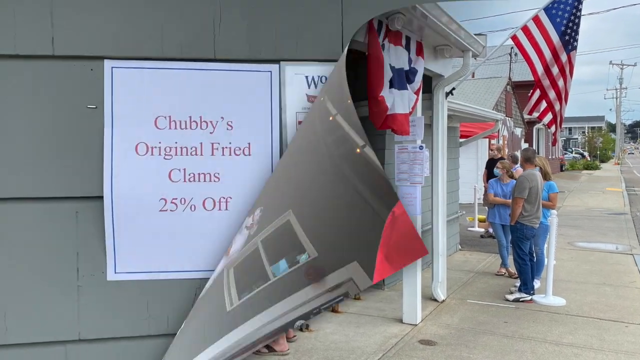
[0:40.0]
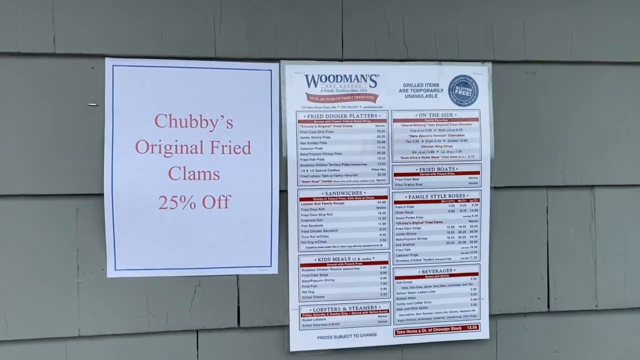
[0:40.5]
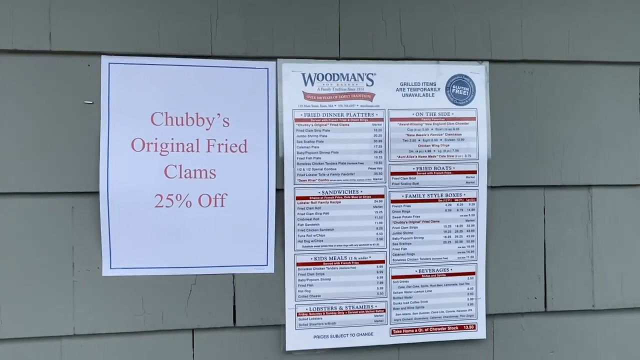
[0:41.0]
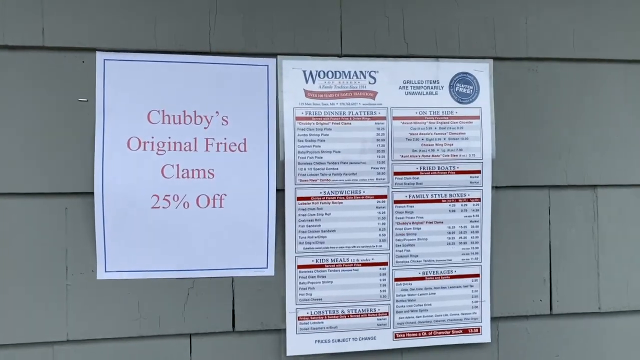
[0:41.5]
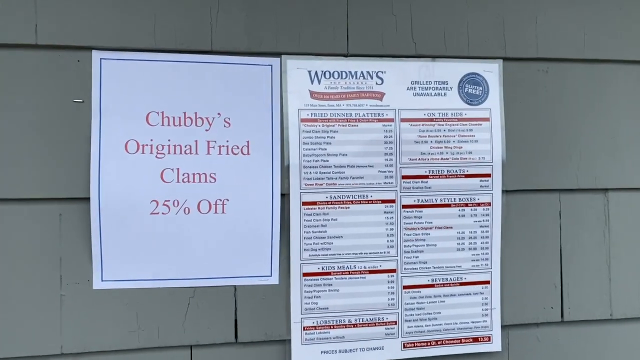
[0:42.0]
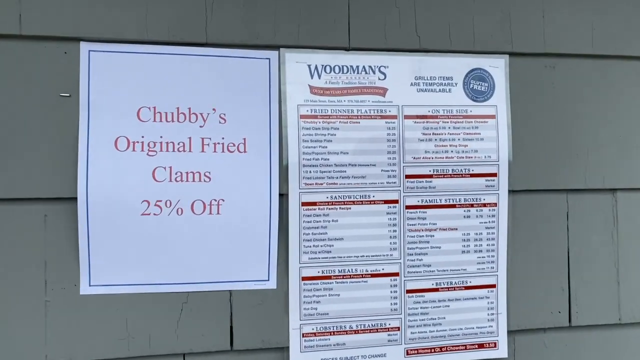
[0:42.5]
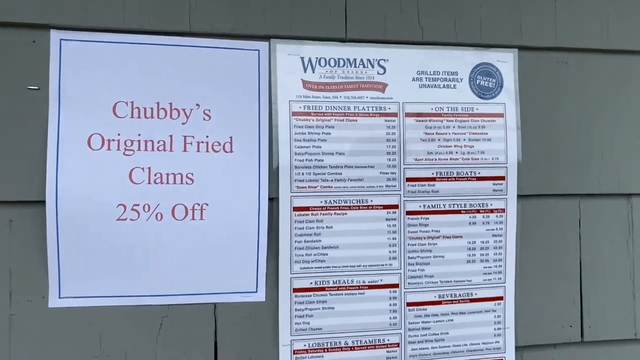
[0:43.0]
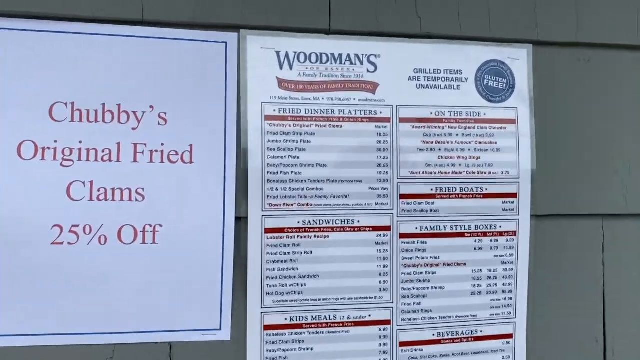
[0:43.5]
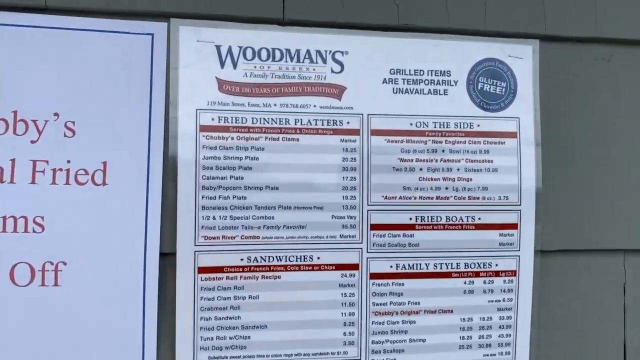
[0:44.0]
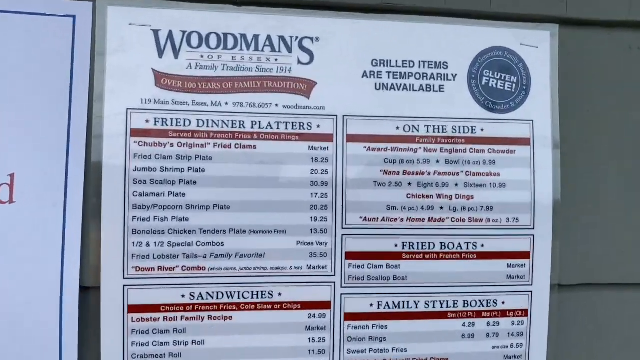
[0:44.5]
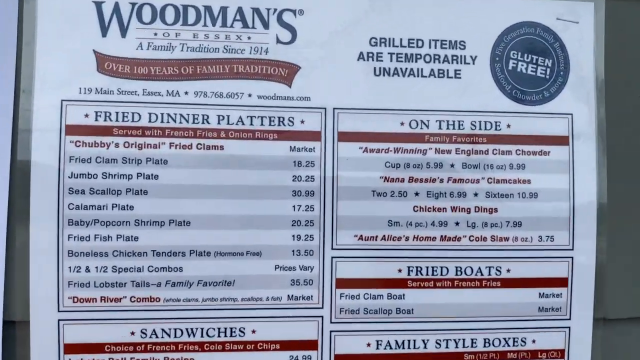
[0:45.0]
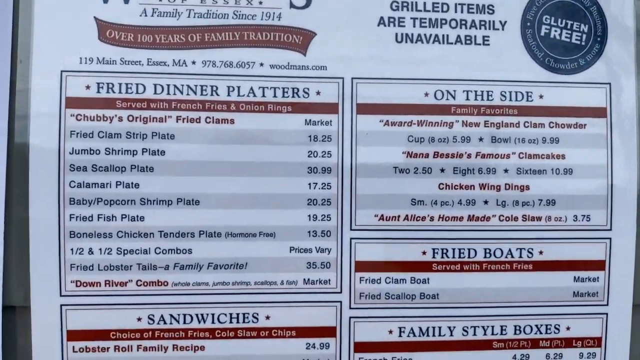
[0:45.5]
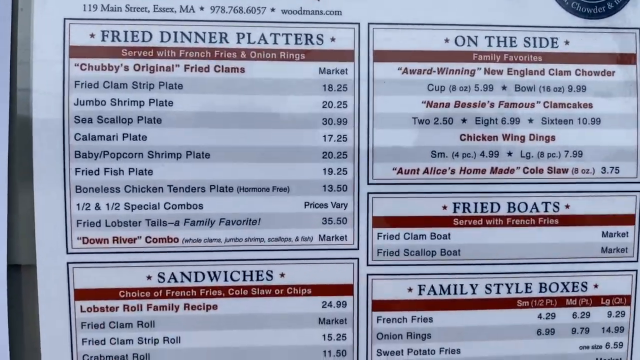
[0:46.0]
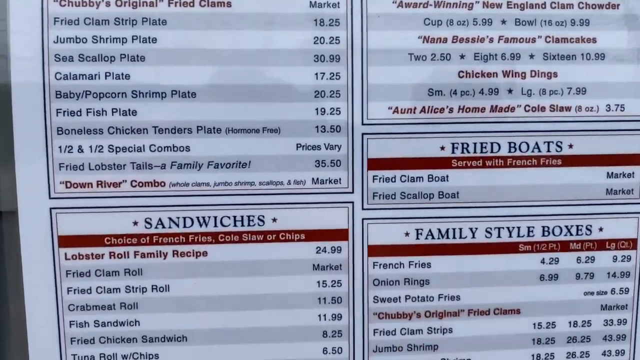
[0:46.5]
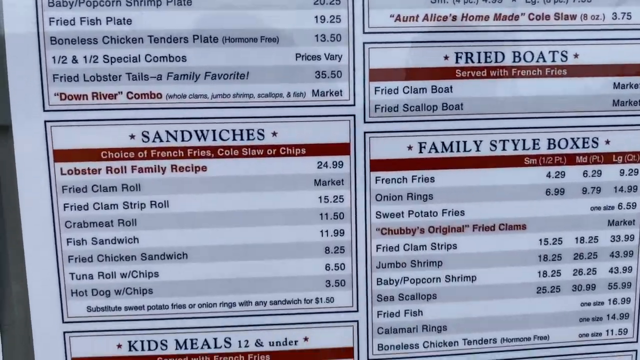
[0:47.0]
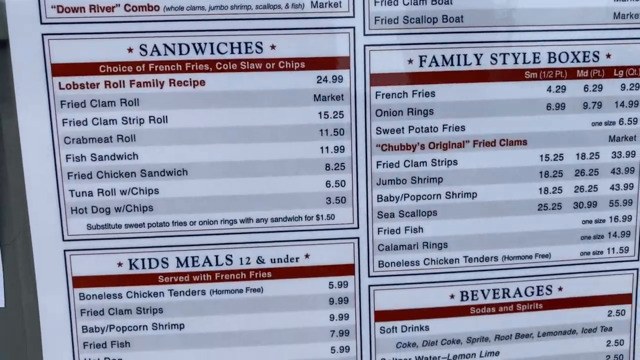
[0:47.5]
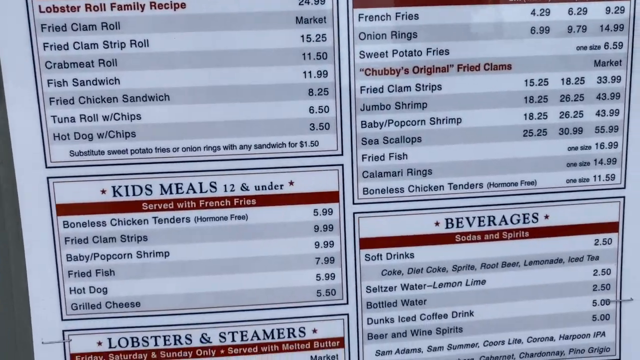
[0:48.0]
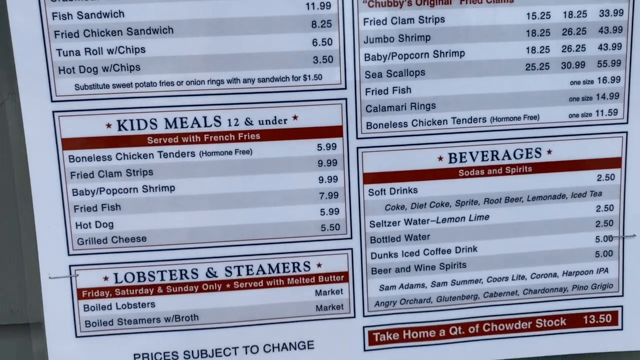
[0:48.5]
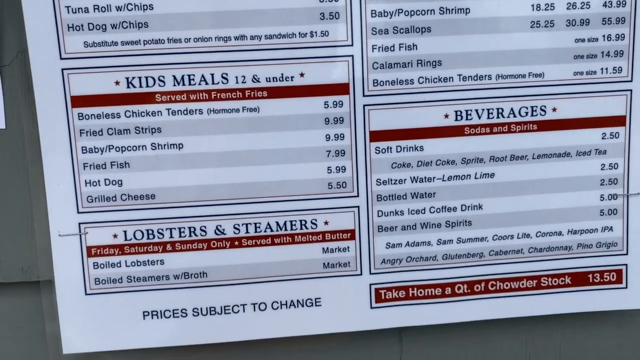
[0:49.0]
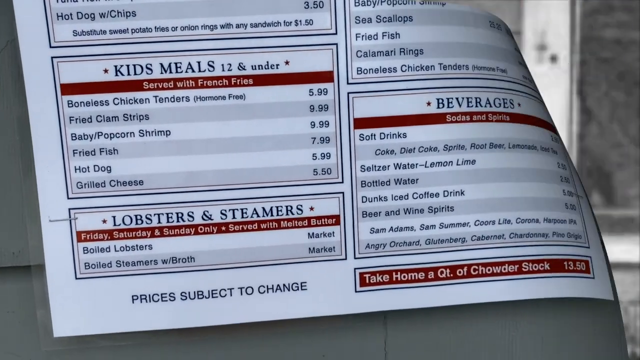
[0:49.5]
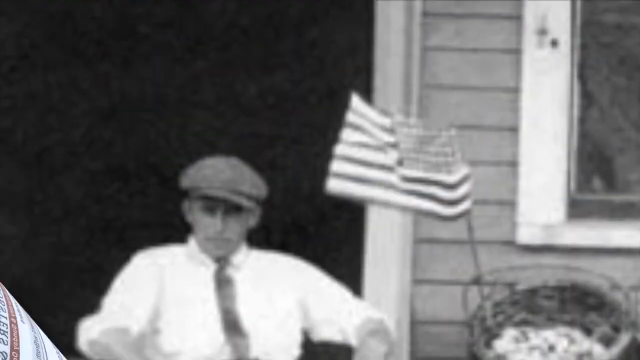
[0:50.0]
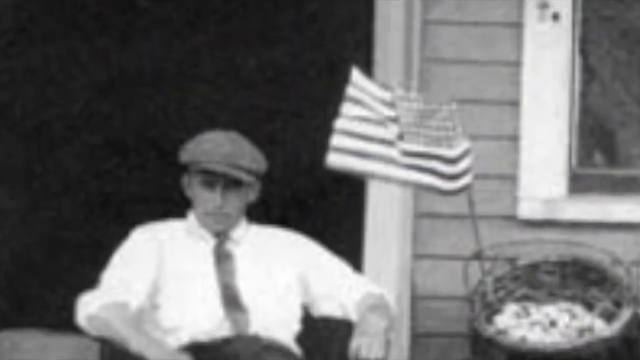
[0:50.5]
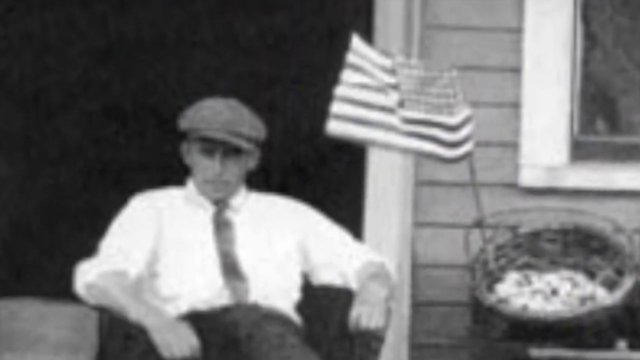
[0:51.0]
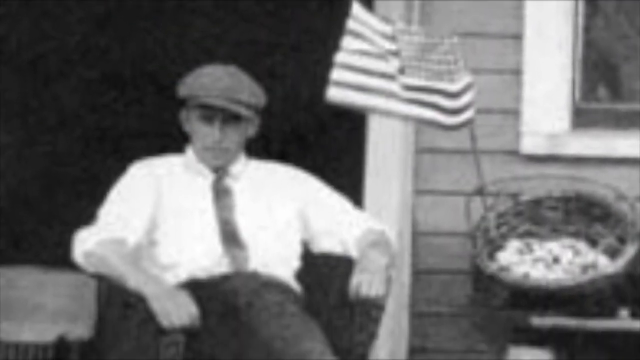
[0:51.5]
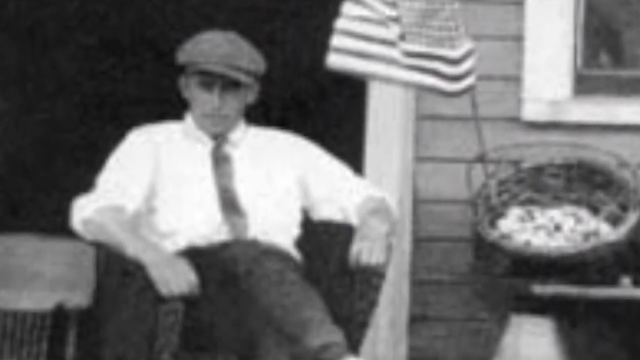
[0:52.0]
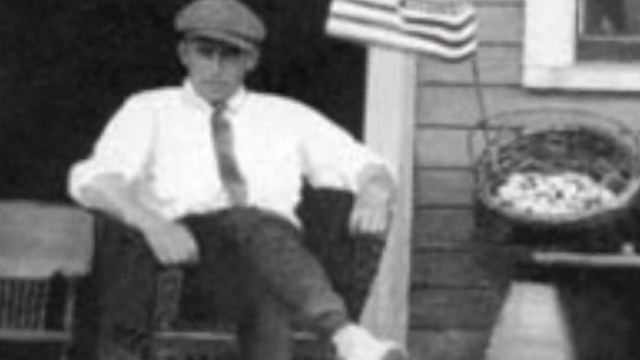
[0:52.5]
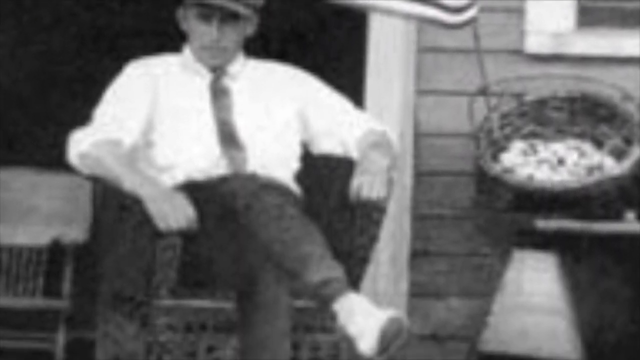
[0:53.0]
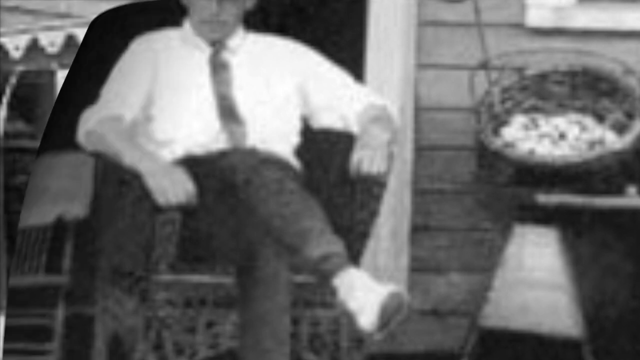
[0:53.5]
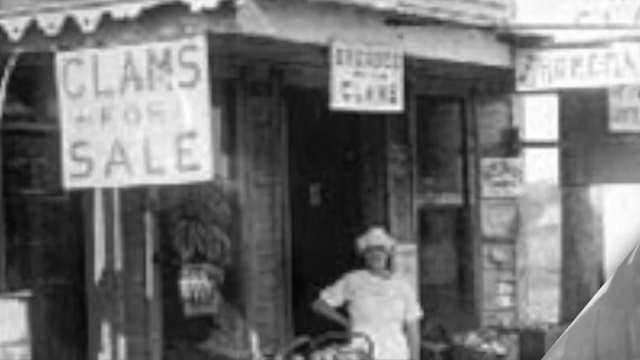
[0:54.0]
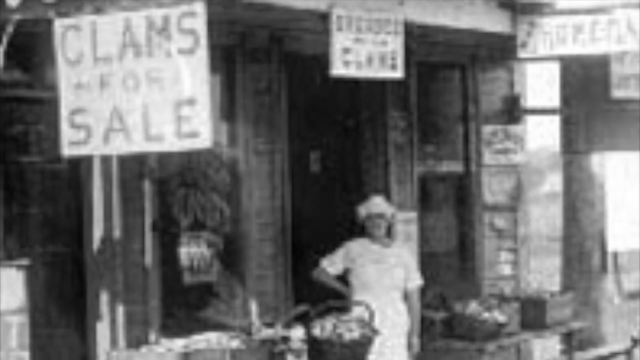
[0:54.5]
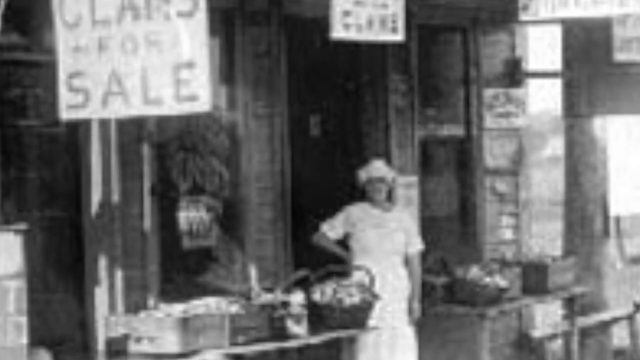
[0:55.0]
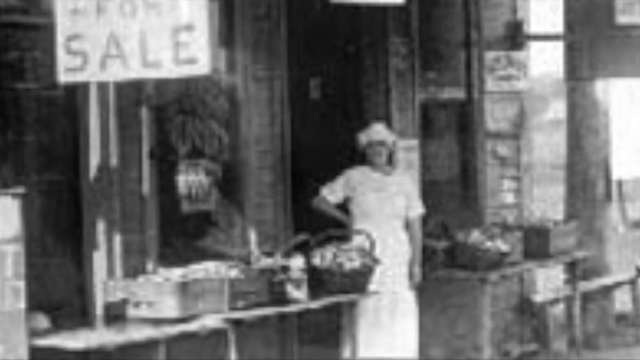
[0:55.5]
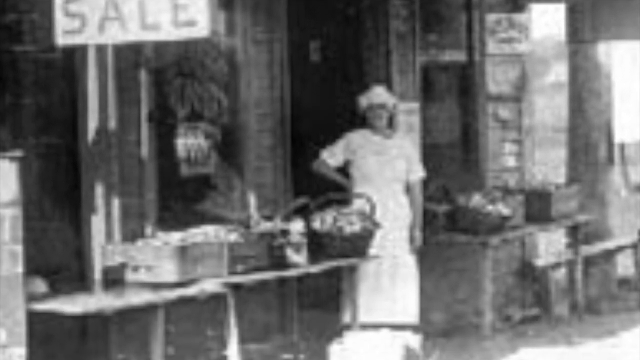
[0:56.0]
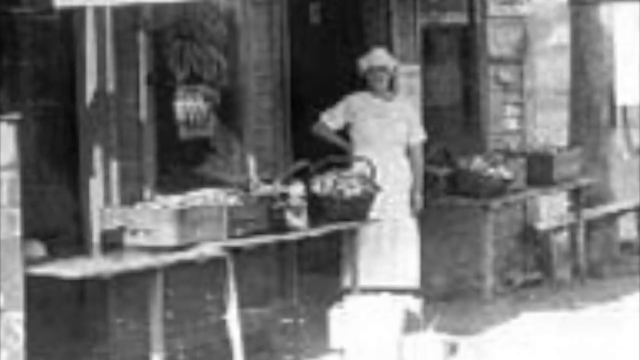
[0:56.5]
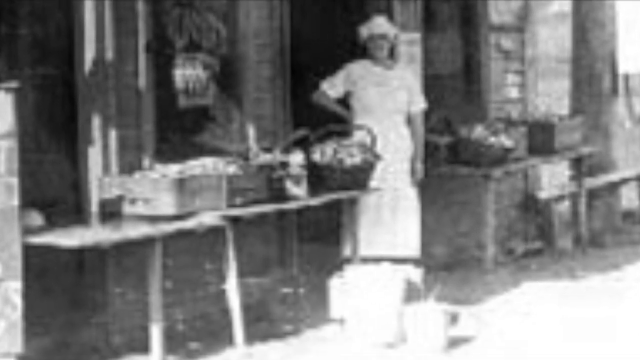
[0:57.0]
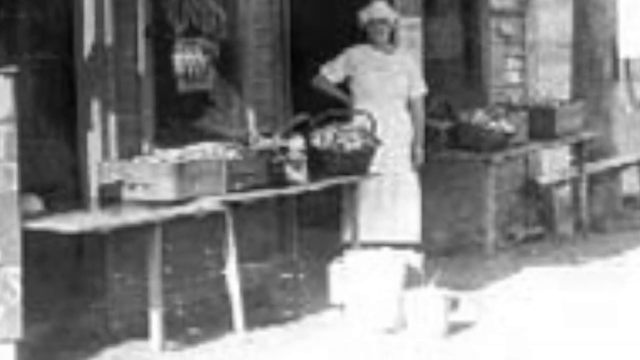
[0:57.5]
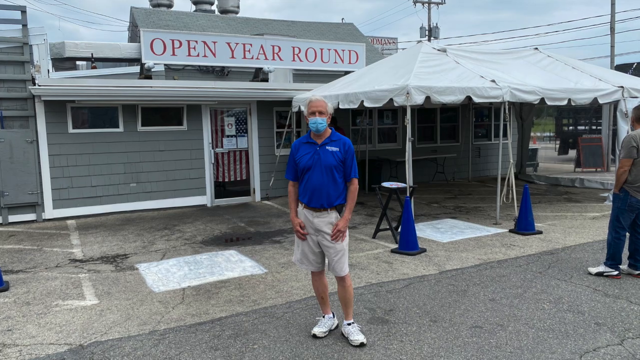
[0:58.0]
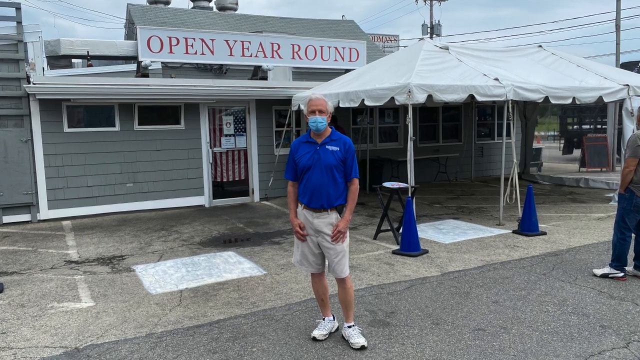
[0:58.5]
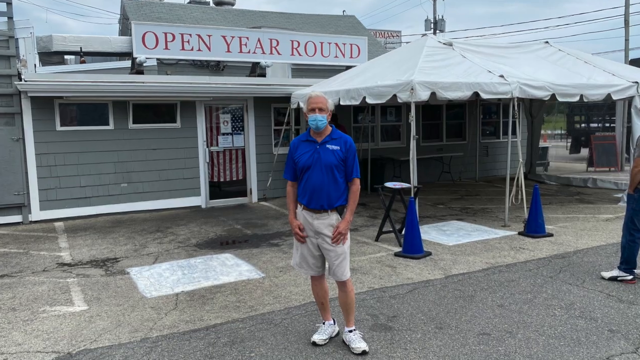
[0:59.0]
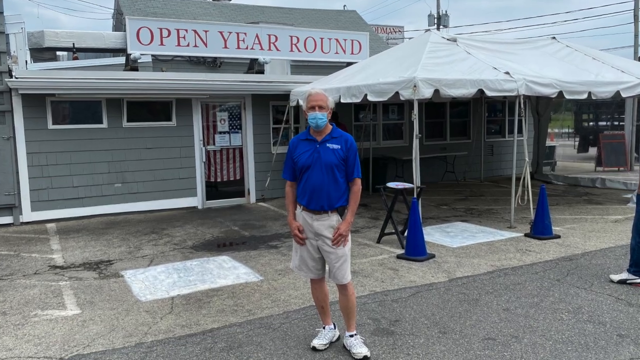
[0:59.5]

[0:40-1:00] A grey wall with some sort of cladding has a menu for Woodman's on the right of the screen, and next to it a white sign with a thin black border close to the edge says "Chubby's Original Fried Clams 25% off" in red letters. The camera zooms into the menu, which lists types of food such as fried dinner plates, side dishes, fried boats, sandwiches, family style boxes, kids meals, drinks, lobsters and steamers. Next comes a black and white picture of an old man sitting outside the same building in a flat cap and tie, white shirt and black trousers, with an American flag flying next to him. Then there is another sign that says "Clams for Sale", and a black and white photo of a woman clad in white with some baskets of clams in front of her. Then the building is shown in its modern form.